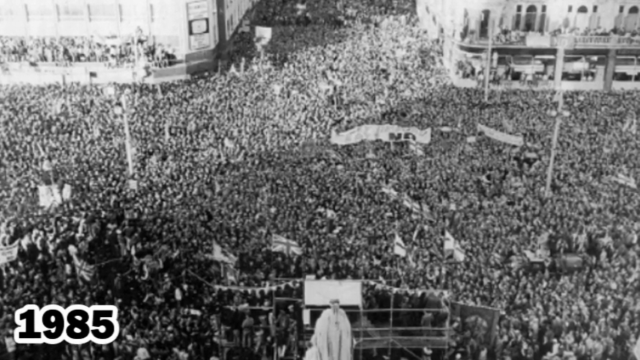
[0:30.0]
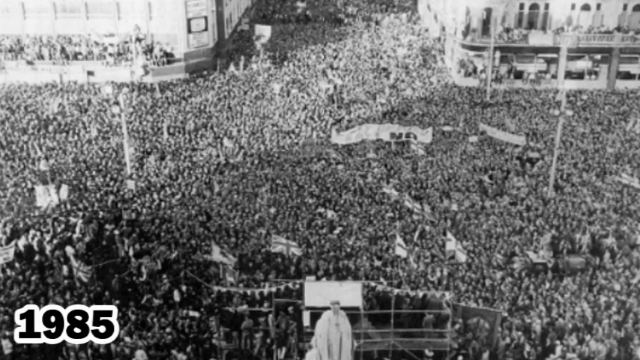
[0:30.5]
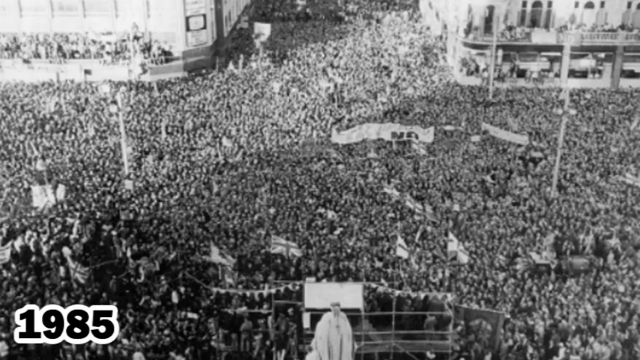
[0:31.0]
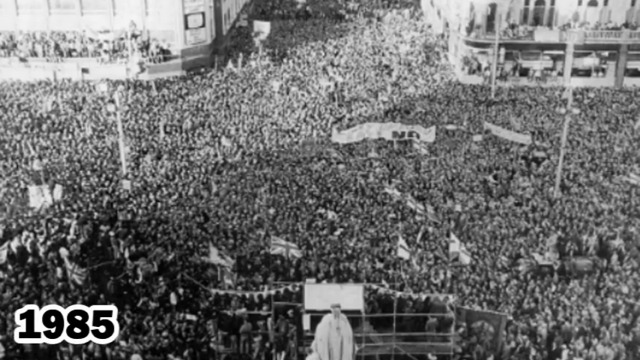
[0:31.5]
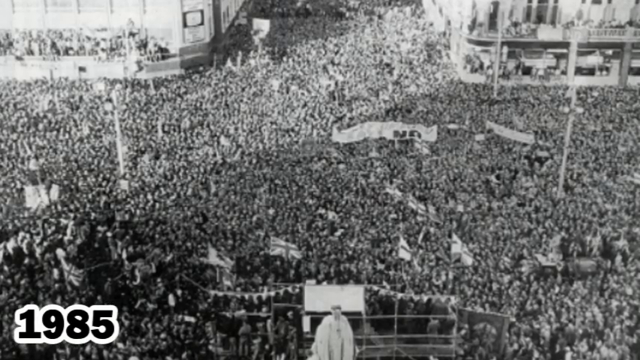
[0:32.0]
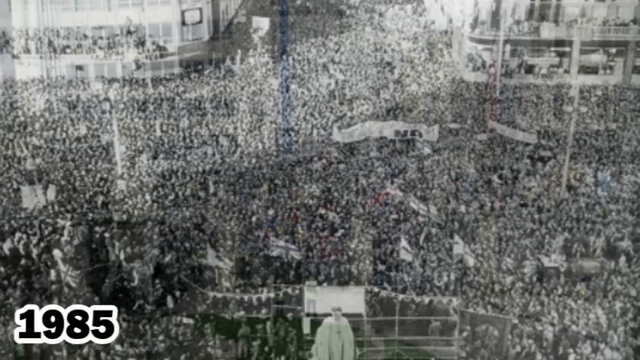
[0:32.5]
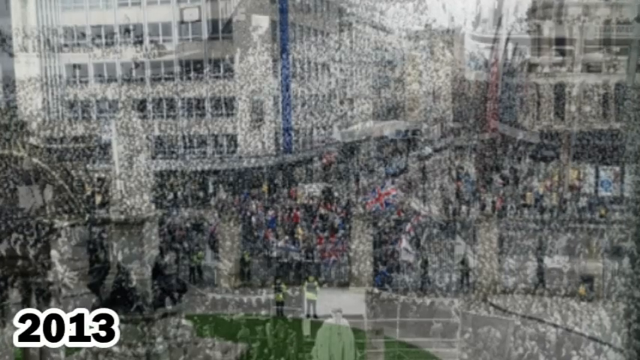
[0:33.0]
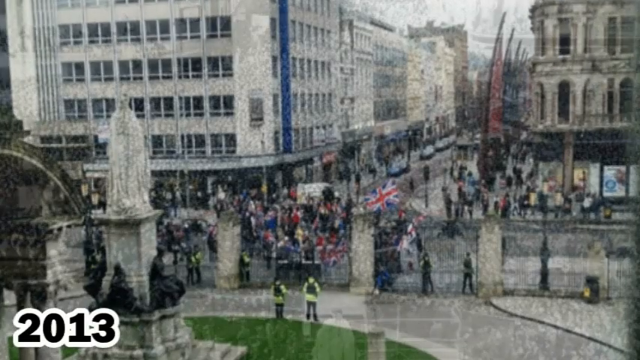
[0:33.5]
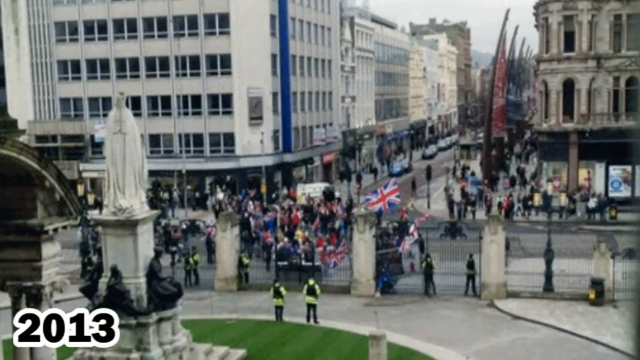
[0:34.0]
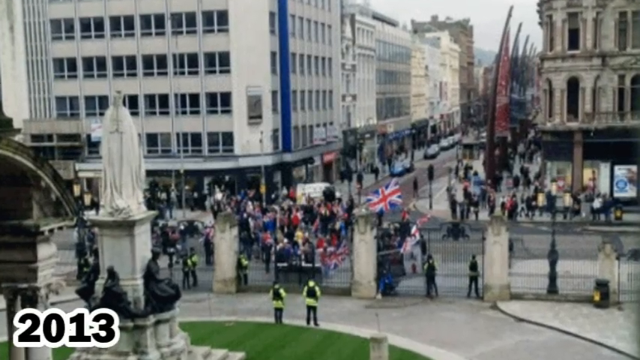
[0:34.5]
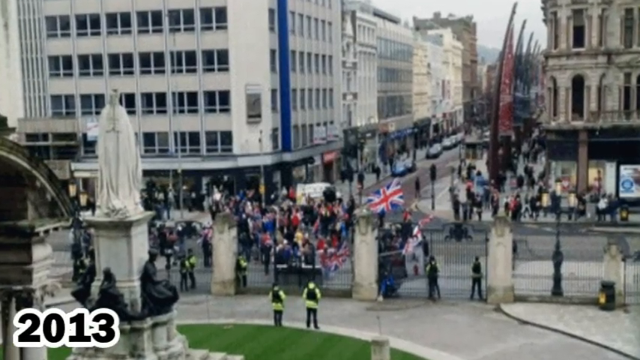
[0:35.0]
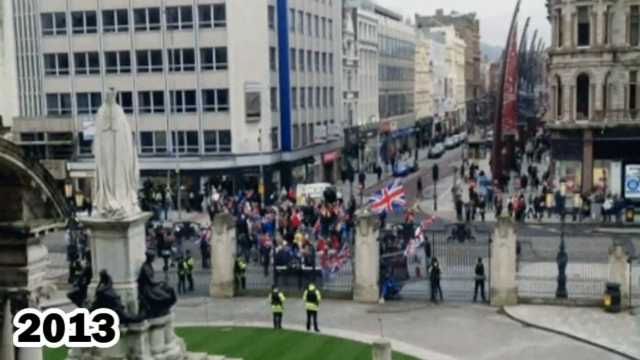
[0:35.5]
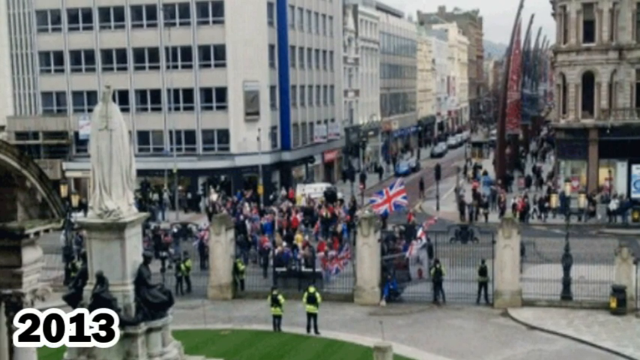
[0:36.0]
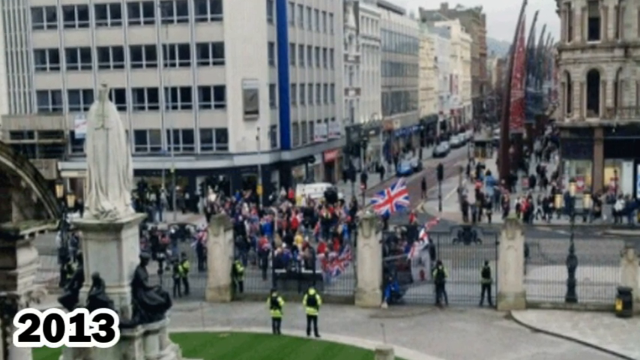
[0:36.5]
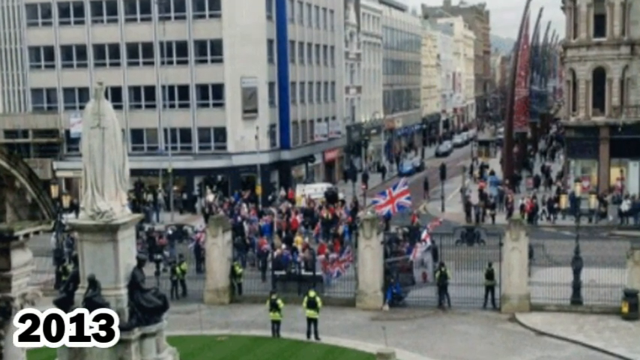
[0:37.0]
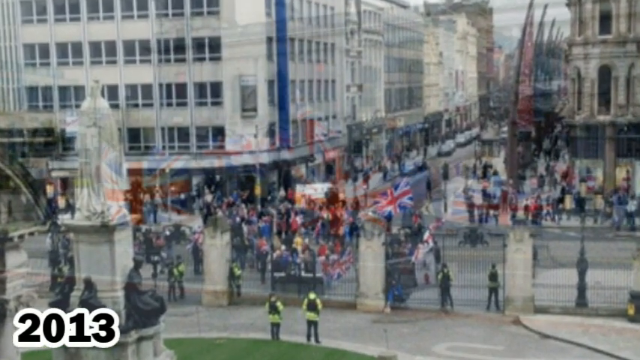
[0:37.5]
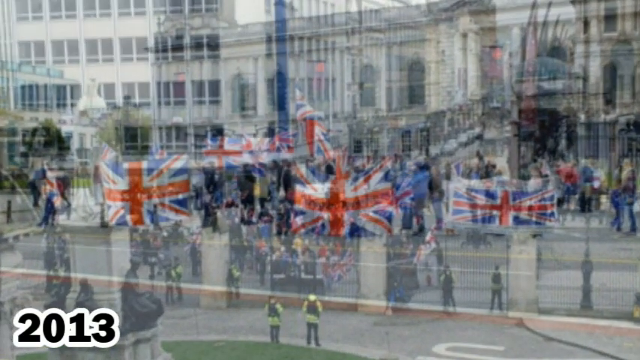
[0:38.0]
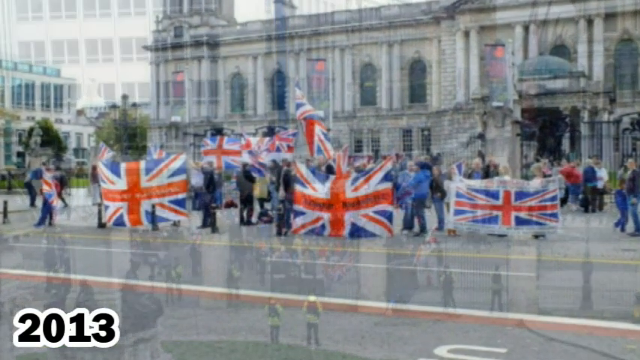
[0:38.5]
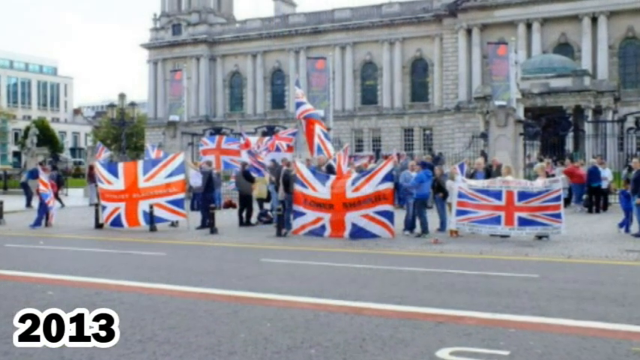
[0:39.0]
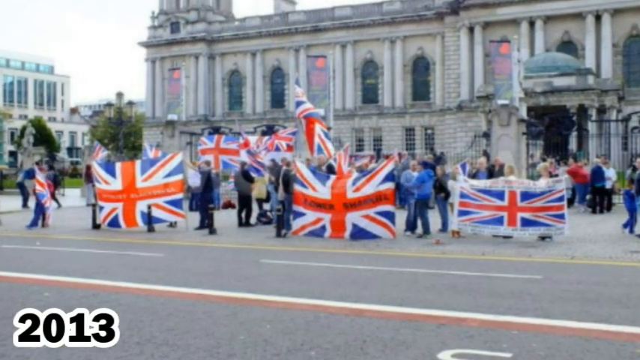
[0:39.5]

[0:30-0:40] A black-and-white still photo looks like a protest scene, taken from very high up: thousands of people are completely crammed onto a street in an urban city, holding up signs that are white banners, with tall buildings in the background. The camera sort of pans out on the photo, then it switches to a more modern color photo, also of a city street, which appears to be in England. There are British flags and maybe a couple hundred people milling around. There are tall buildings; everything is white, including the buildings and a white statue. It is daytime and very bright outside. Another photo, also in England, is taken outside a big palace next to a road, where different people are holding up life-size British flags. There are probably six flags in total, most of them unfurled, probably about eight feet long and about six feet tall.